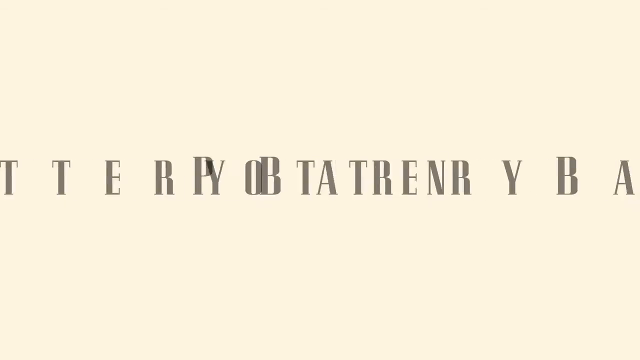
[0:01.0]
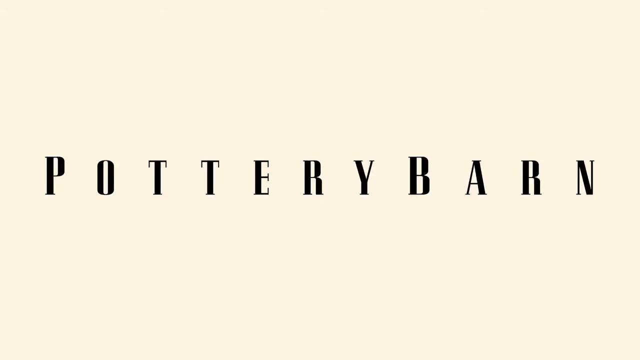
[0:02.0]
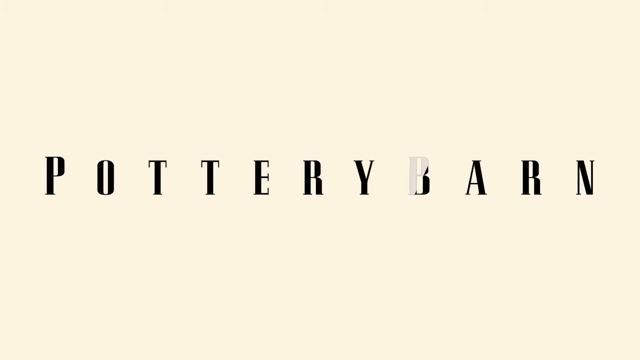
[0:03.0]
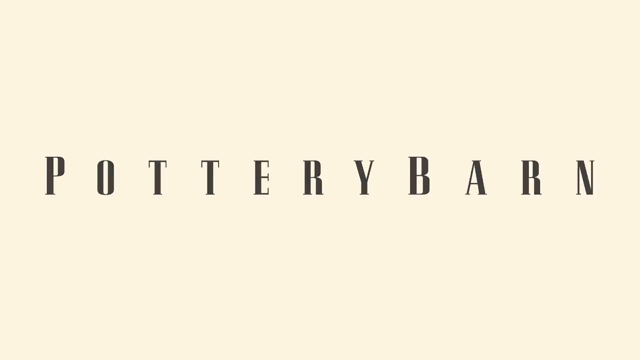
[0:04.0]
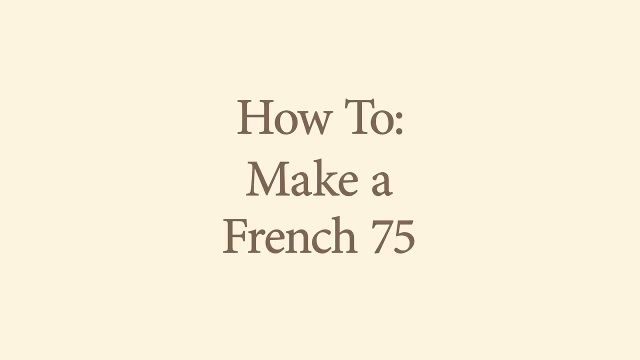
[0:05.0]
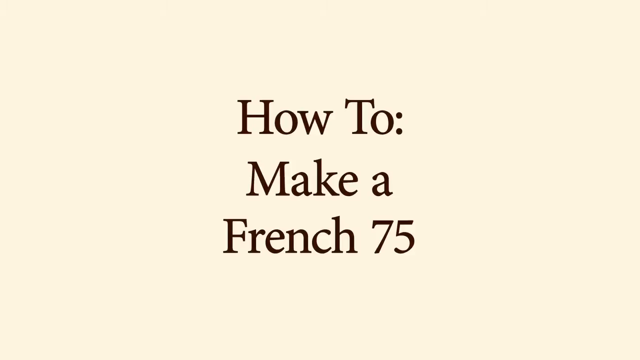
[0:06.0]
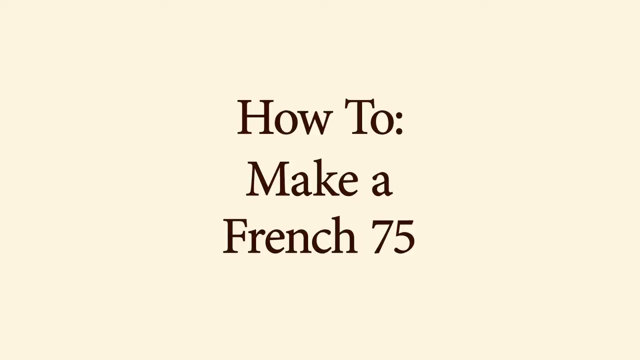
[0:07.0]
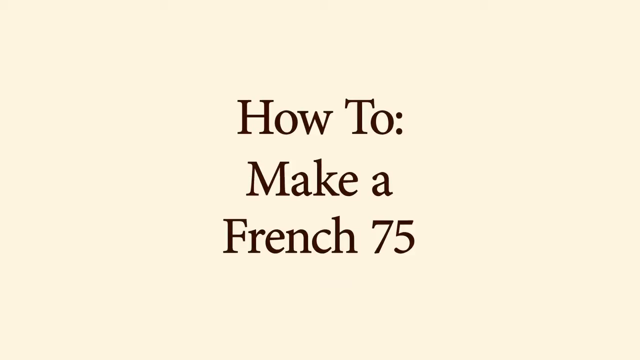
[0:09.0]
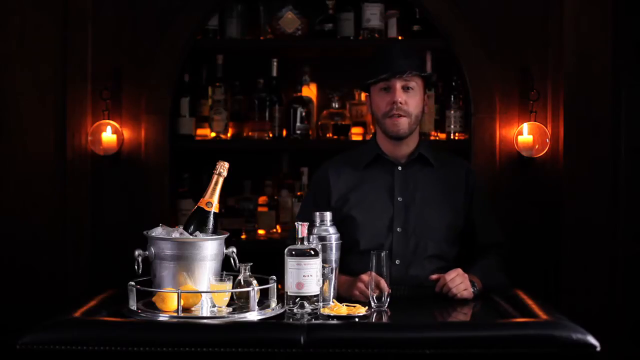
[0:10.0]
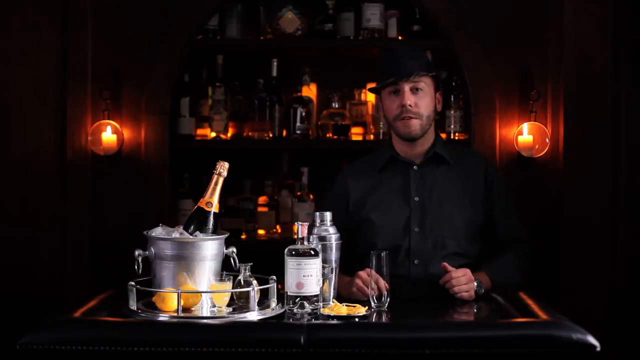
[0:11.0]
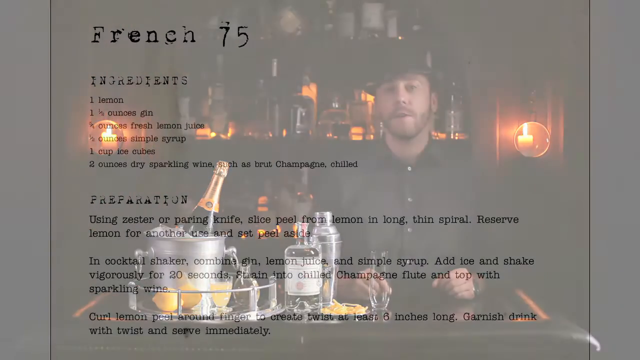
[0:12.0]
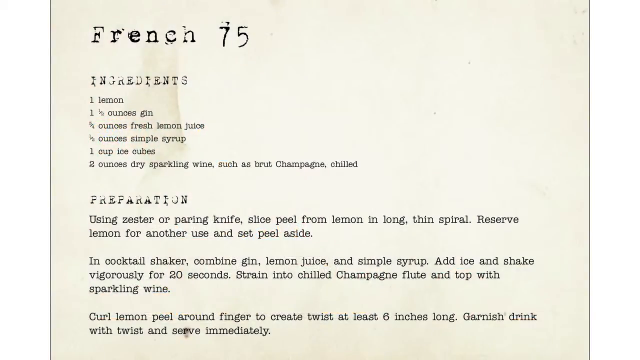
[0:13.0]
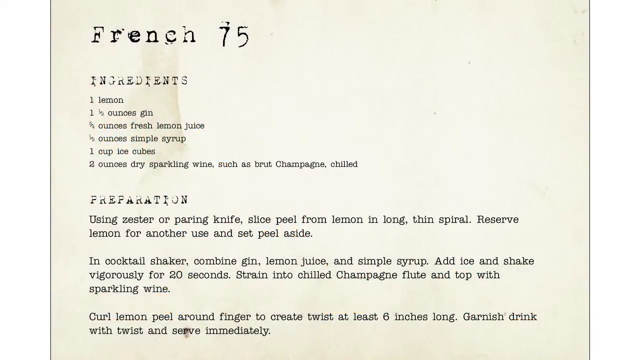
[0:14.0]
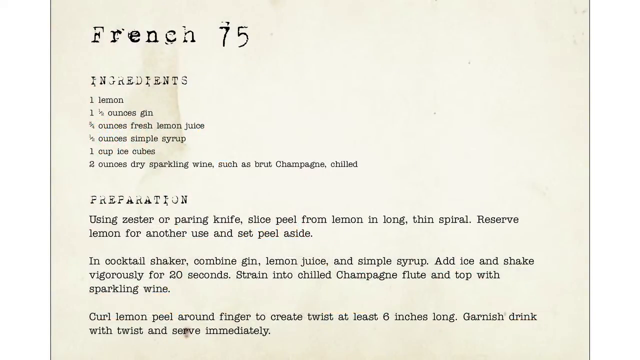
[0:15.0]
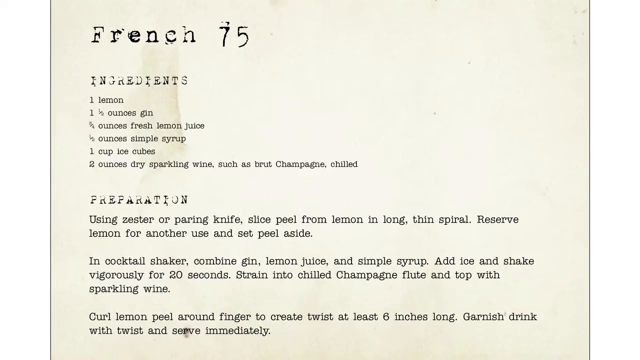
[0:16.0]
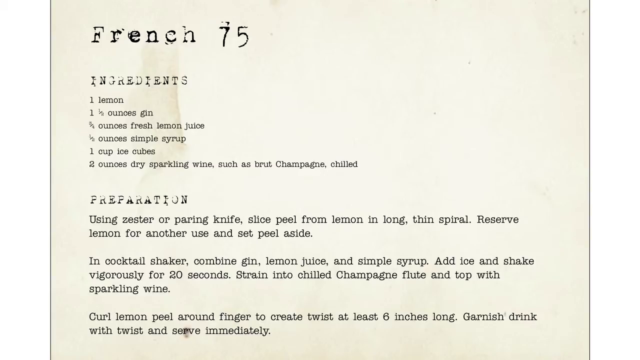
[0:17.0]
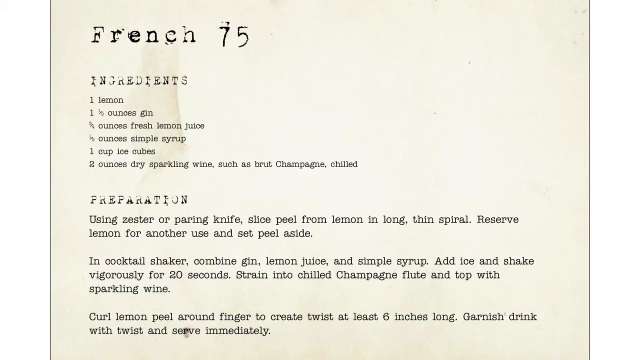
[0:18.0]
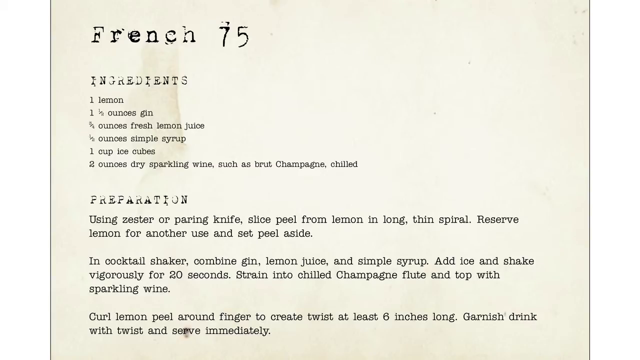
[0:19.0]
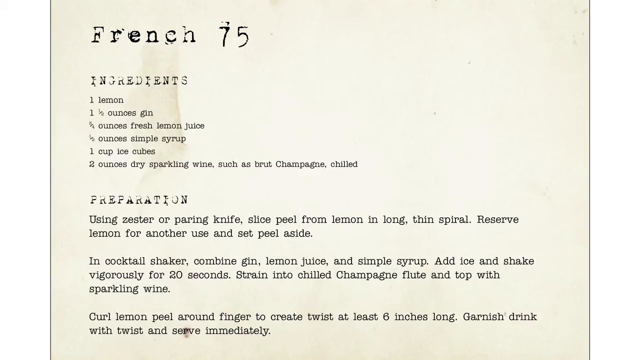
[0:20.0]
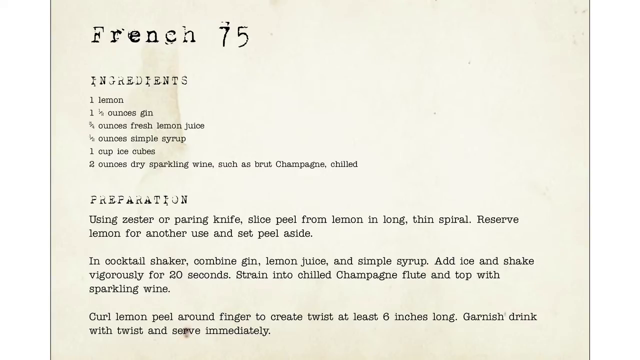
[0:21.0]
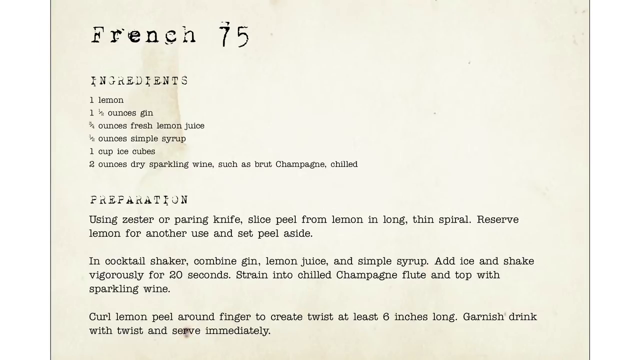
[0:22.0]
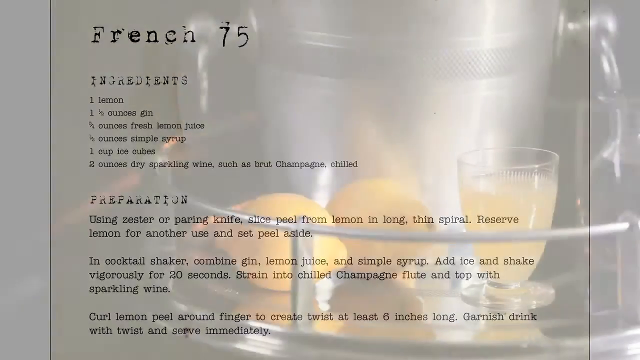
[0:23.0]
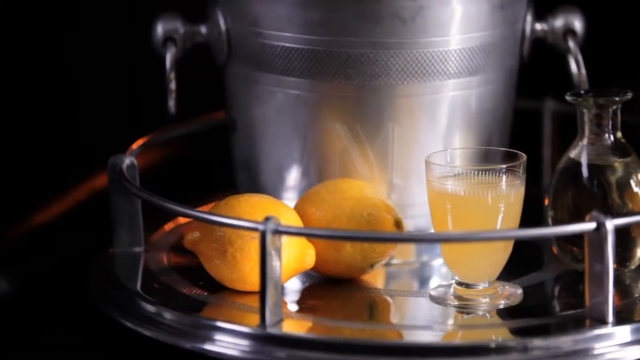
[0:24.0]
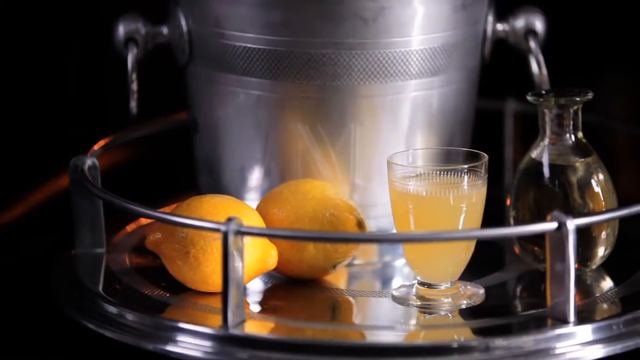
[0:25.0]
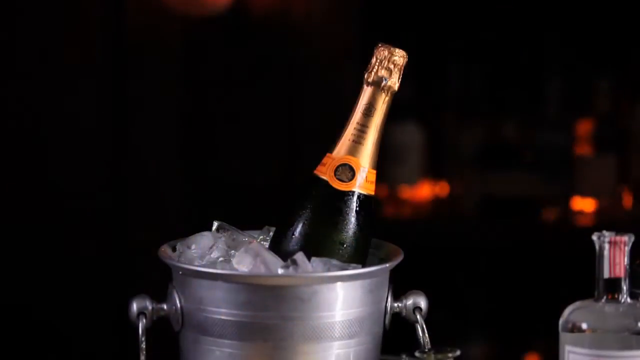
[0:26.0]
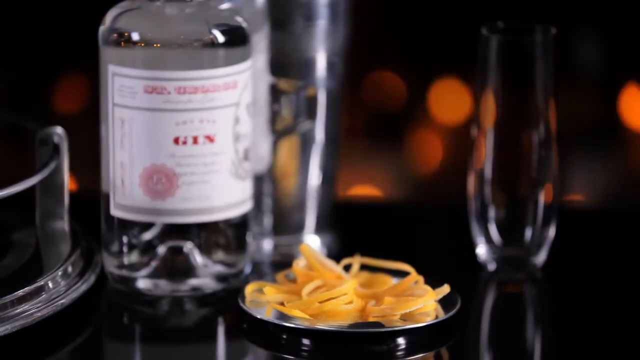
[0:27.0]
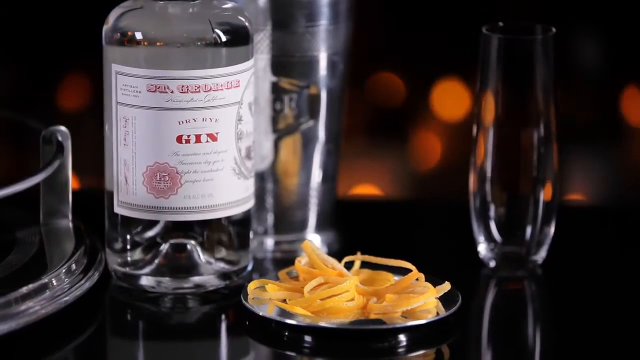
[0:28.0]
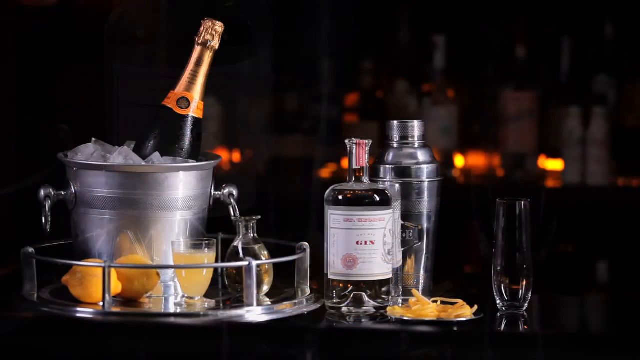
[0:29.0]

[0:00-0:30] The video is about how to make a French 75. A young man in a very dimly lit bar wears a black shirt and a black hat. In front of him are a glass, a gin bottle, a champagne bottle inside an ice bucket, and a mixer. Behind him, on the other side of the bar where the alcohol is placed, are two candle lights. The setup is cozy and intimate. The young man begins to give the ingredients of the French 75: the lemon, one and a half ounces of gin, half an ounce of fresh lemon juice, half an ounce of simple syrup, one cup of ice cubes, and two ounces of dry sparkling wine, chilled.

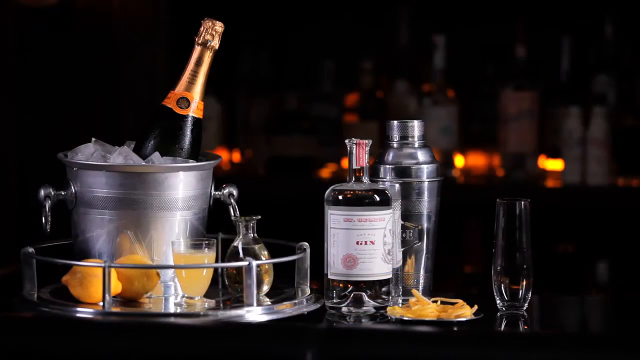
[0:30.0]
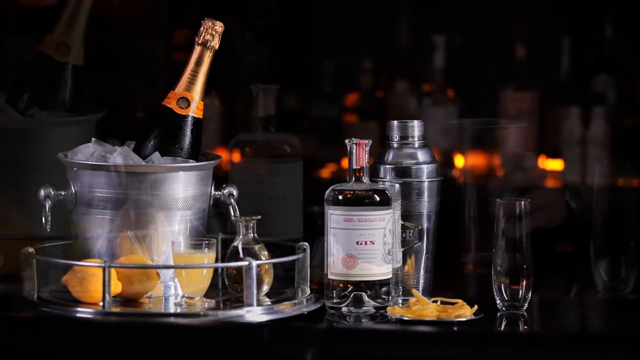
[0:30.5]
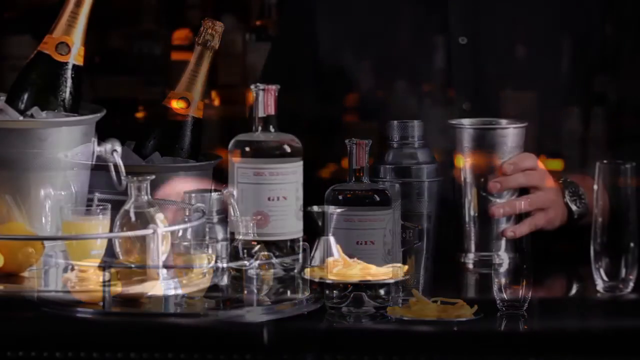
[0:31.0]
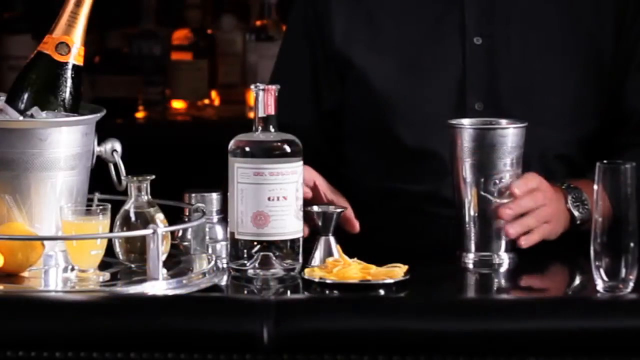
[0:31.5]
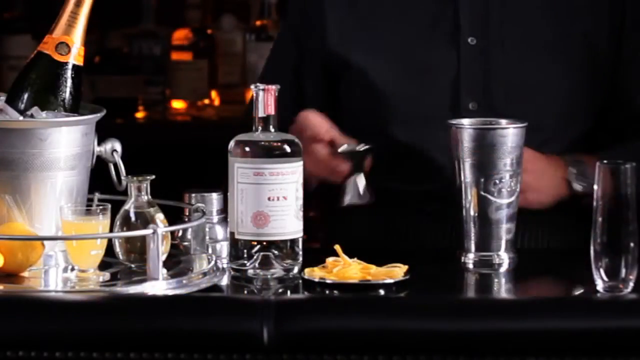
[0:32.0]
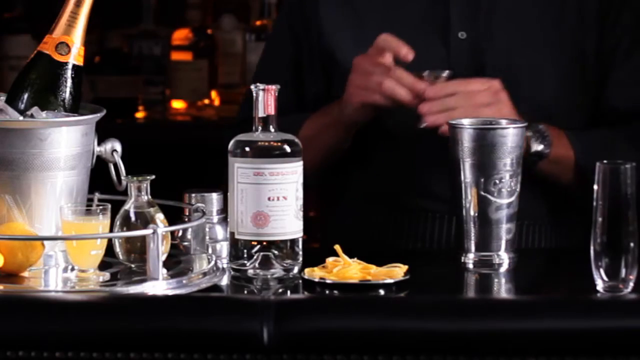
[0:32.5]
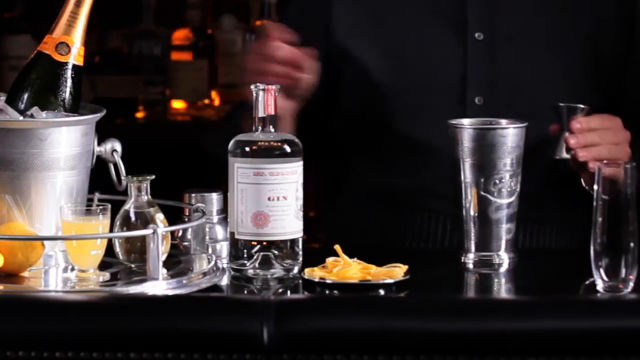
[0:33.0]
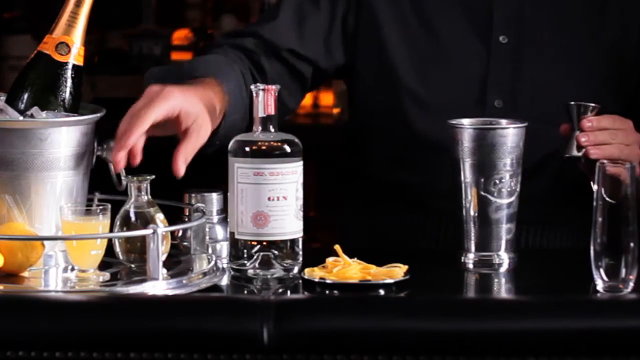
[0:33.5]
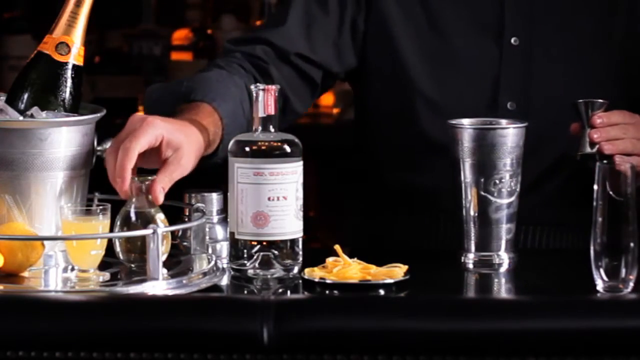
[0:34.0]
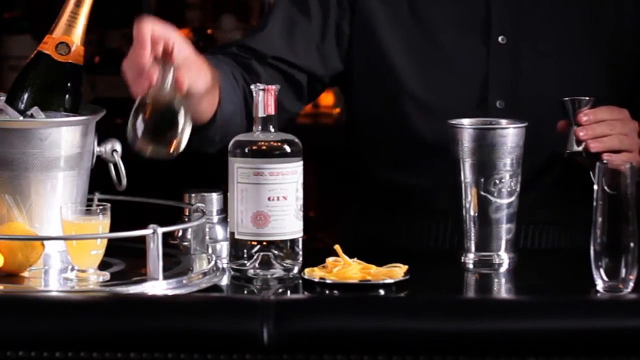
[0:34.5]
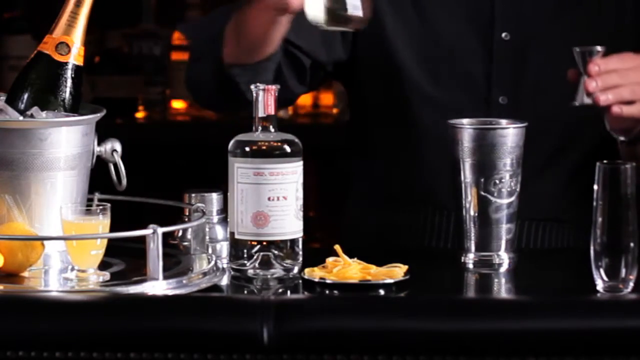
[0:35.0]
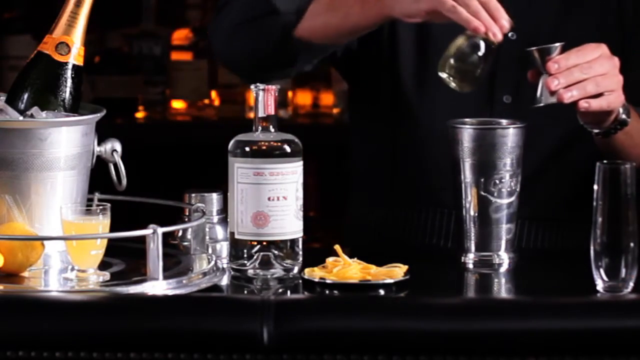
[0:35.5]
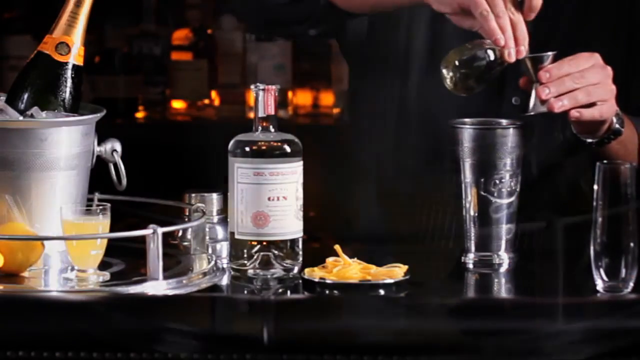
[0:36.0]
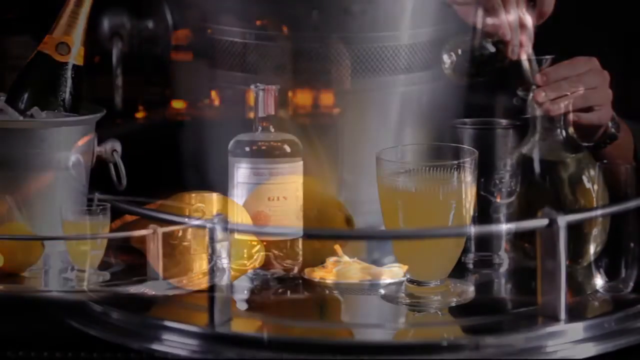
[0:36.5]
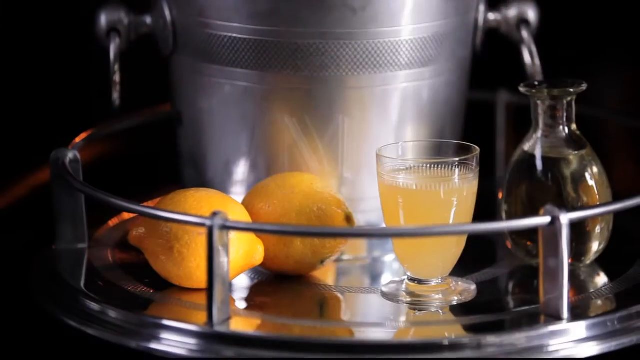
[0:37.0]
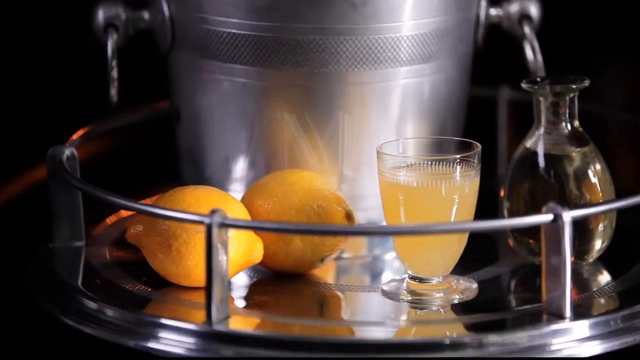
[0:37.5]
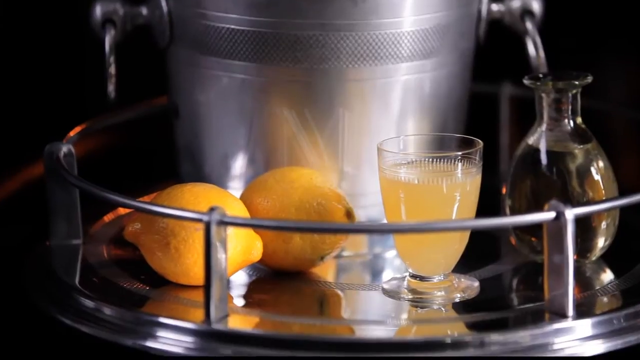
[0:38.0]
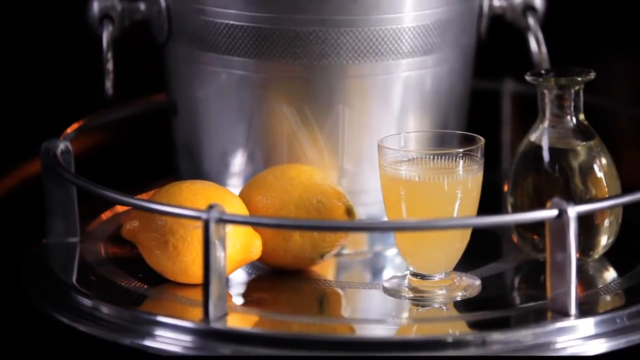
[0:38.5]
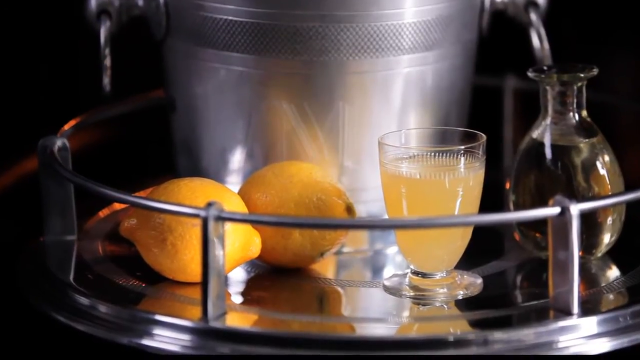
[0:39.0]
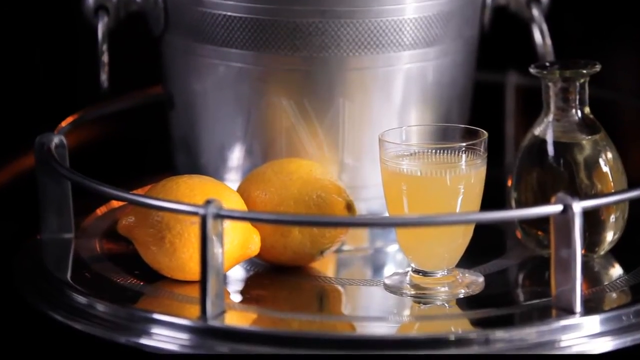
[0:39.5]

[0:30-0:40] A silver ice bucket with champagne inside is on a glass tray. Also on the tray are a glass of lemon juice, two lemons, and a small jar of water that looks like a flower pot. Outside the tray are a bottle of gin, a cocktail mixer, a small glass, and lemon rinds on a small plate. In another glass beaker he has simple syrup.